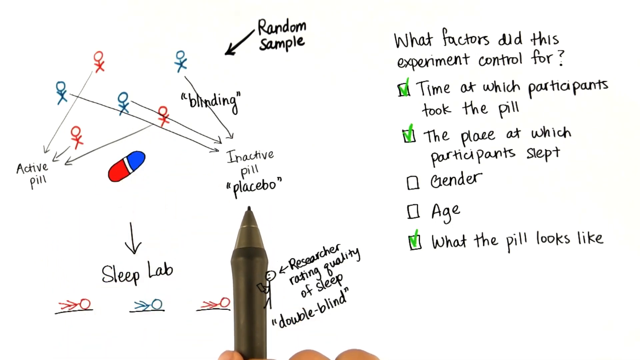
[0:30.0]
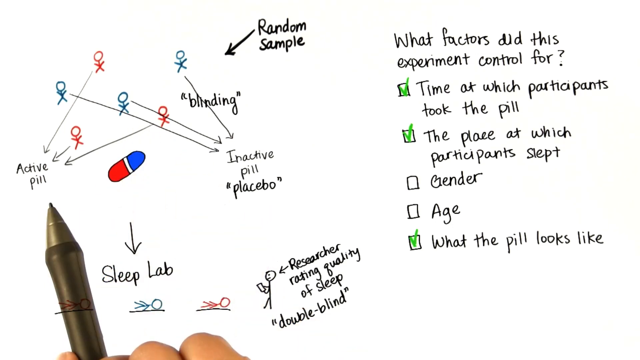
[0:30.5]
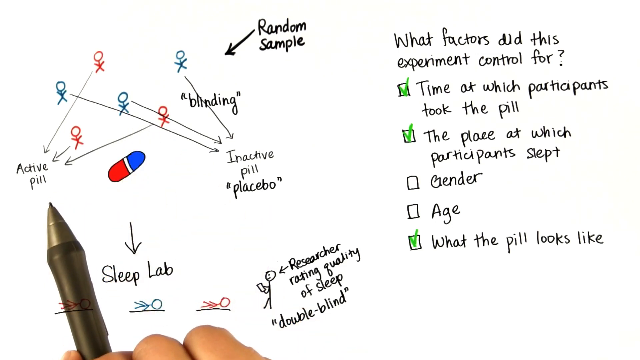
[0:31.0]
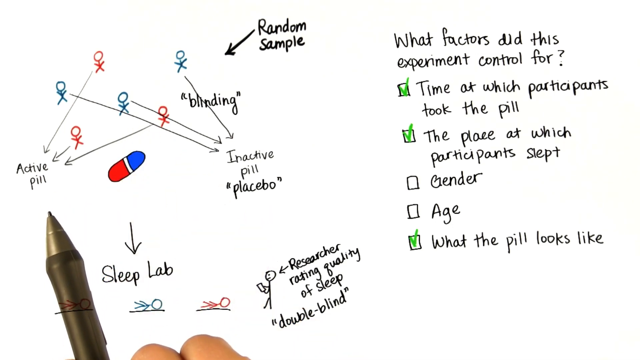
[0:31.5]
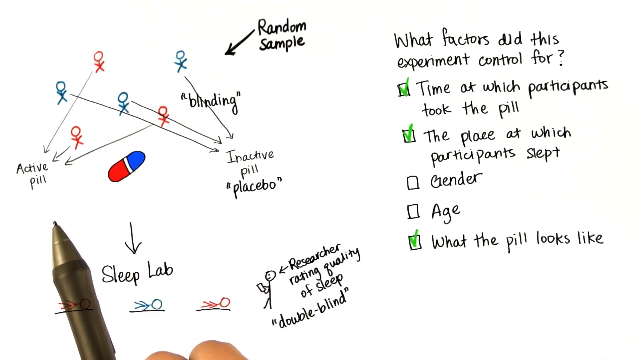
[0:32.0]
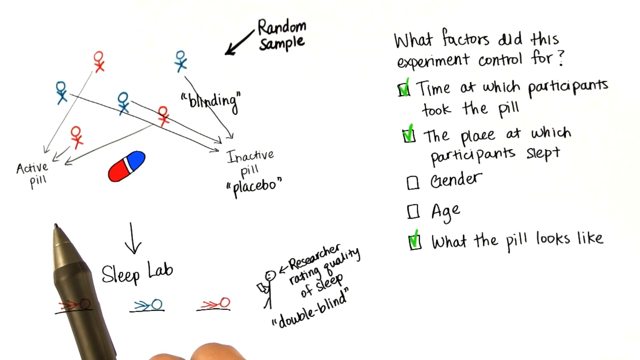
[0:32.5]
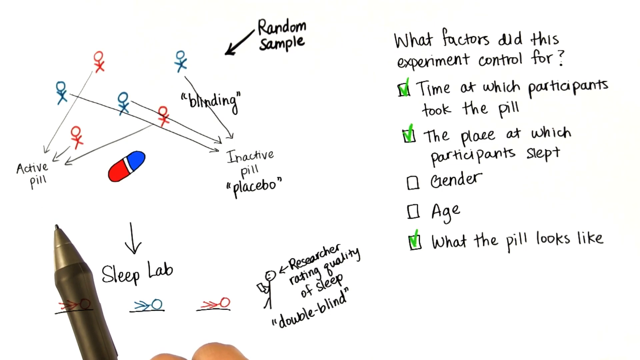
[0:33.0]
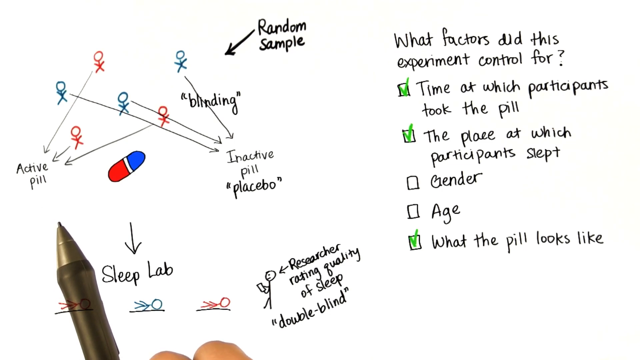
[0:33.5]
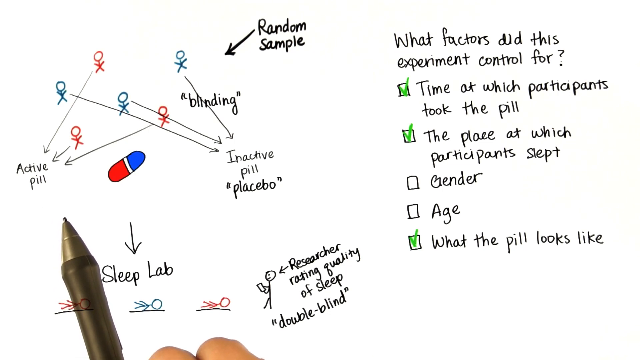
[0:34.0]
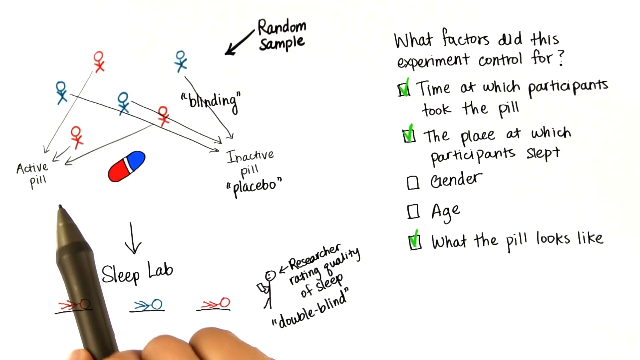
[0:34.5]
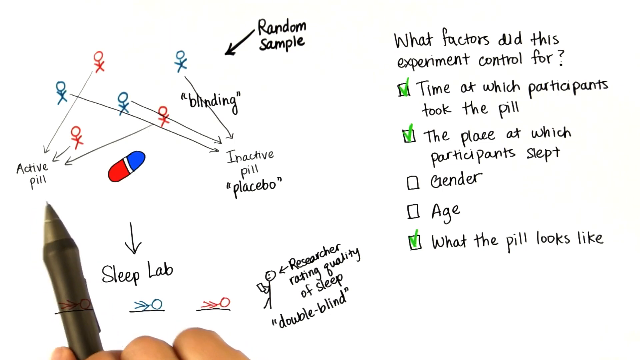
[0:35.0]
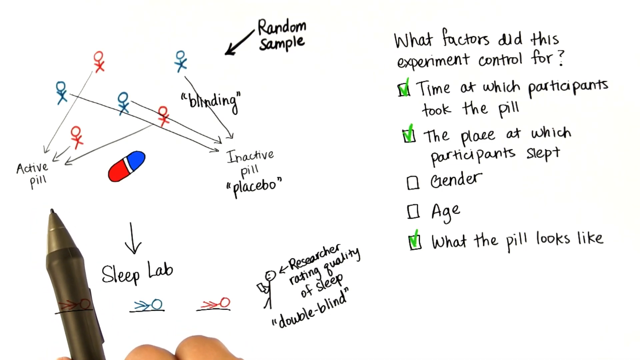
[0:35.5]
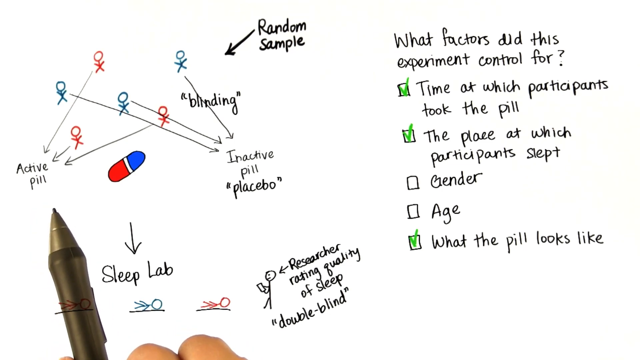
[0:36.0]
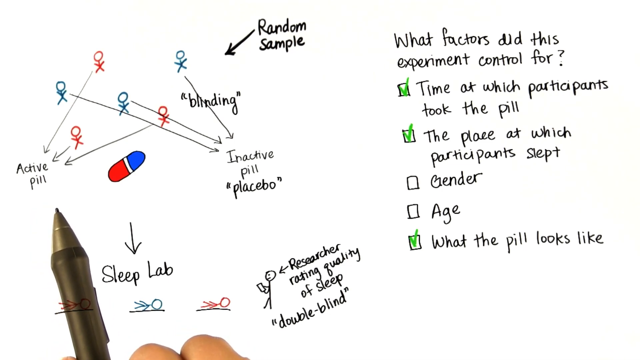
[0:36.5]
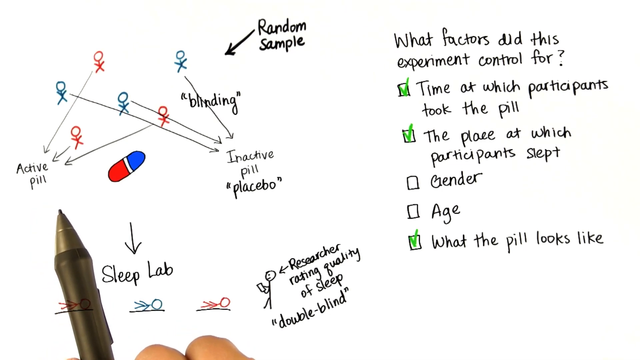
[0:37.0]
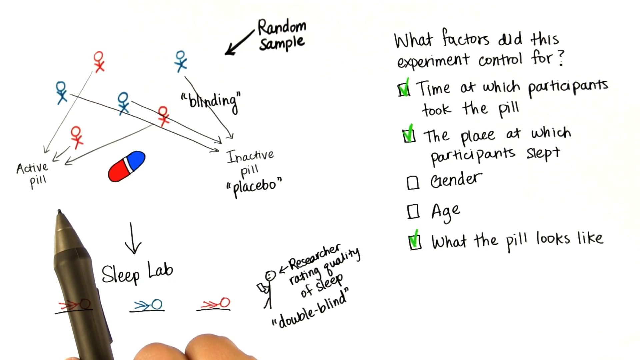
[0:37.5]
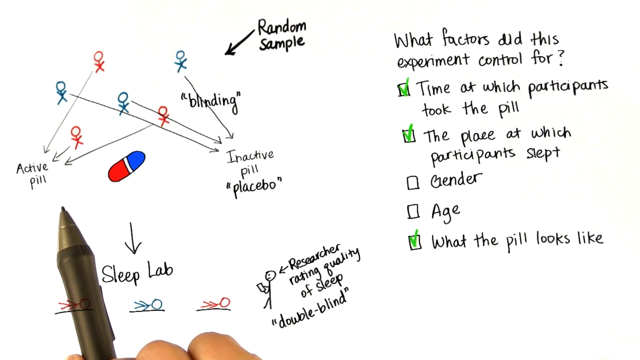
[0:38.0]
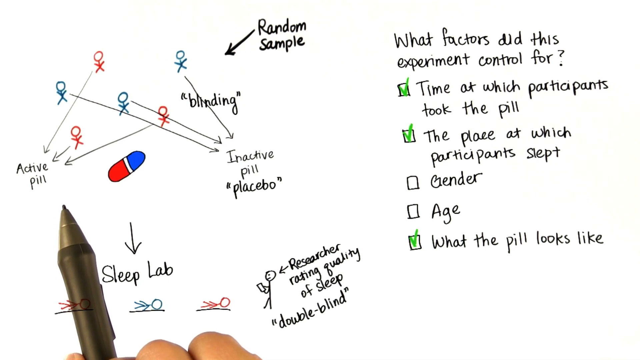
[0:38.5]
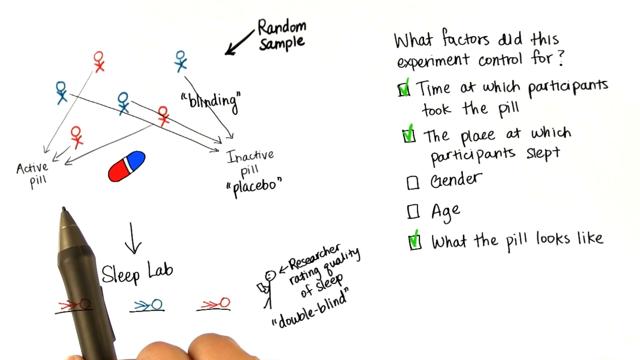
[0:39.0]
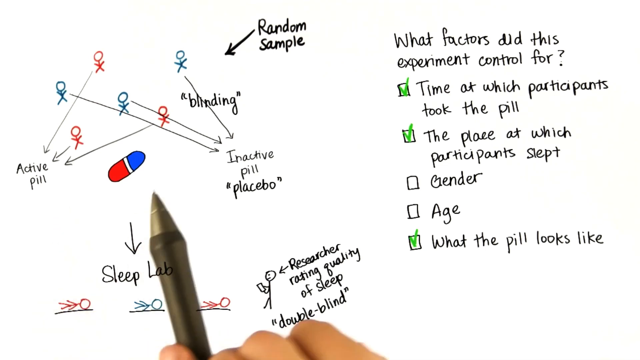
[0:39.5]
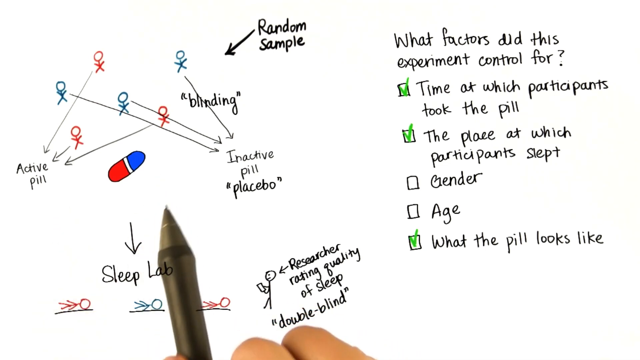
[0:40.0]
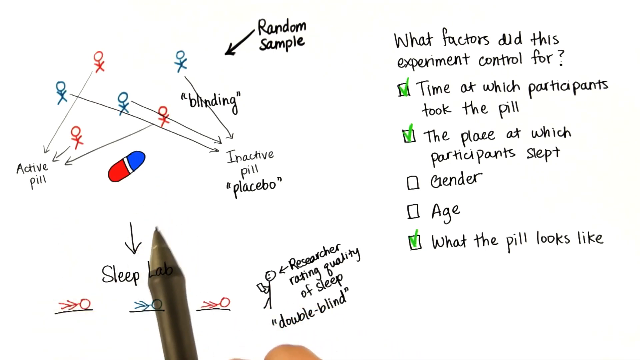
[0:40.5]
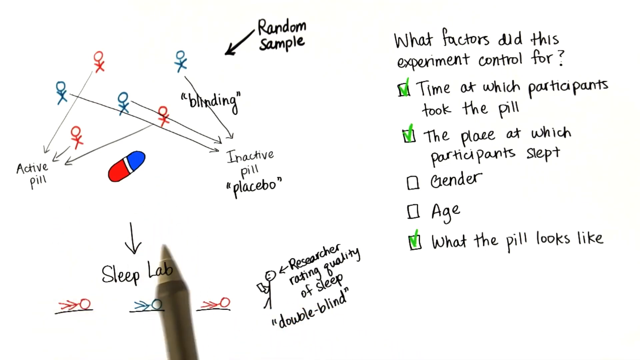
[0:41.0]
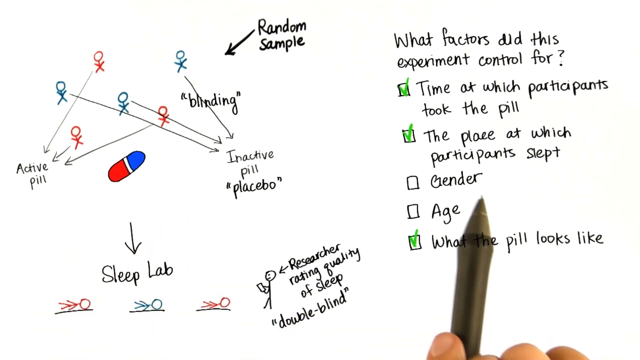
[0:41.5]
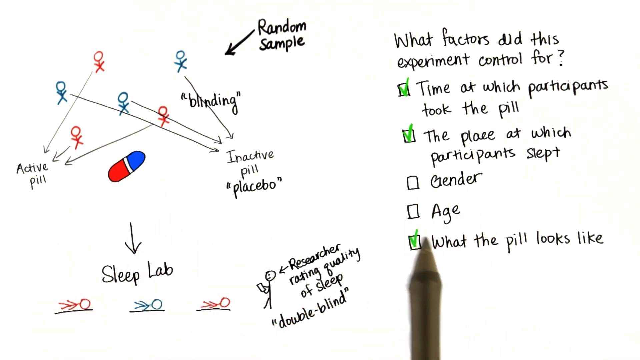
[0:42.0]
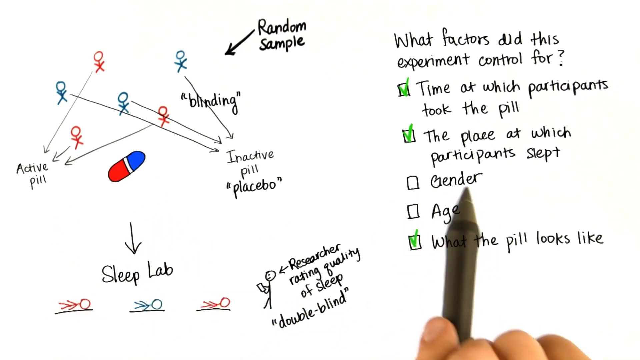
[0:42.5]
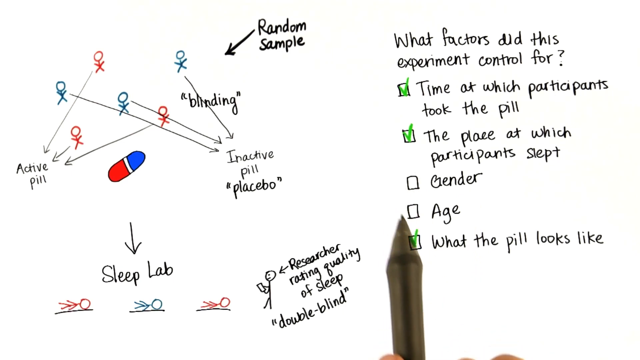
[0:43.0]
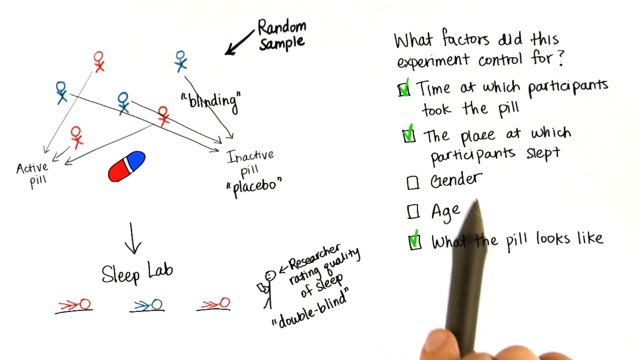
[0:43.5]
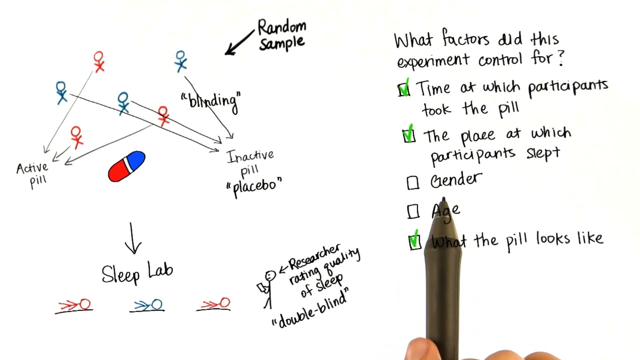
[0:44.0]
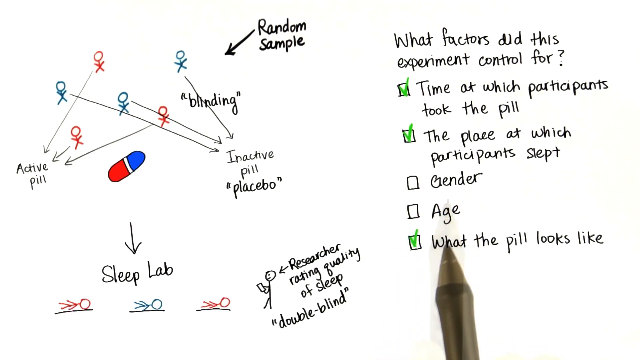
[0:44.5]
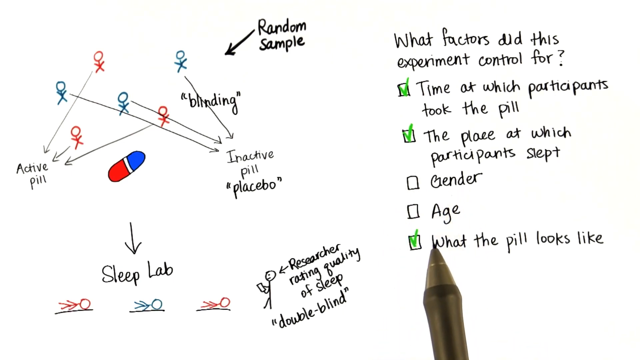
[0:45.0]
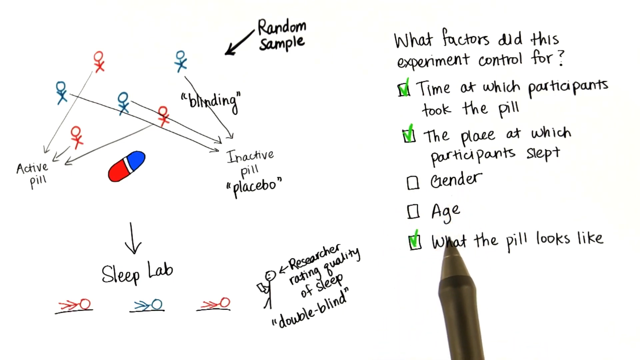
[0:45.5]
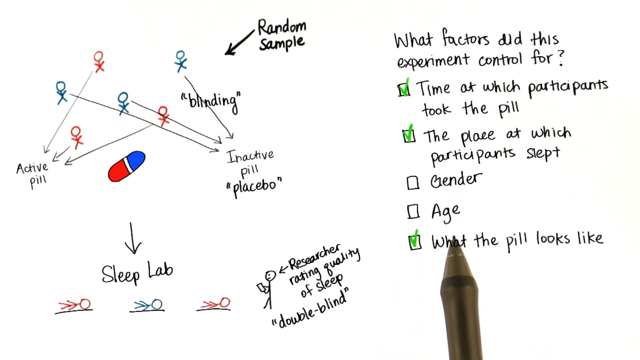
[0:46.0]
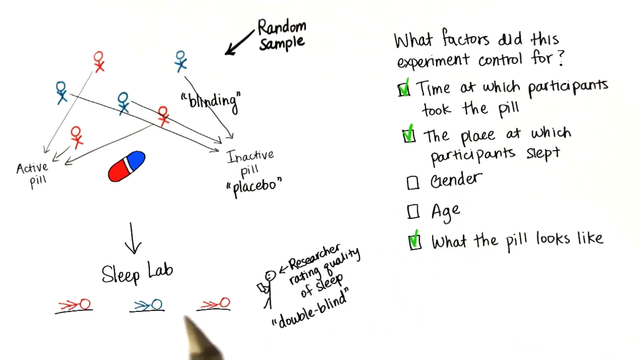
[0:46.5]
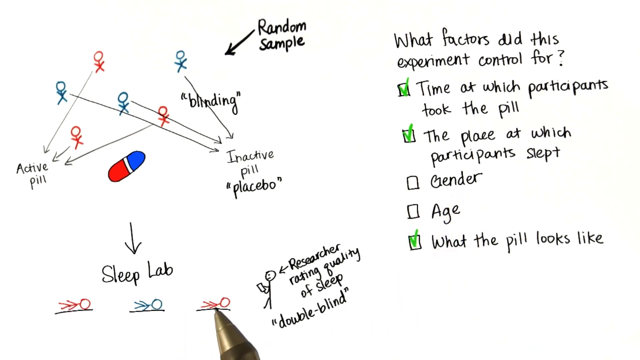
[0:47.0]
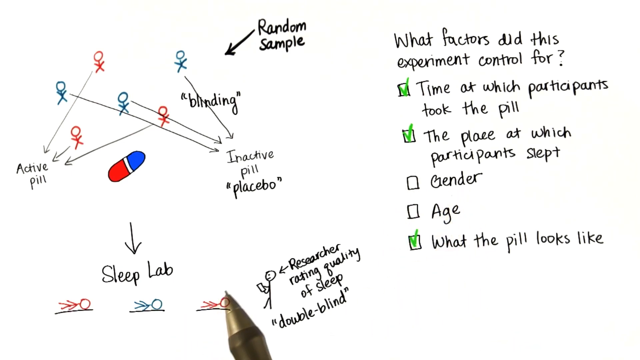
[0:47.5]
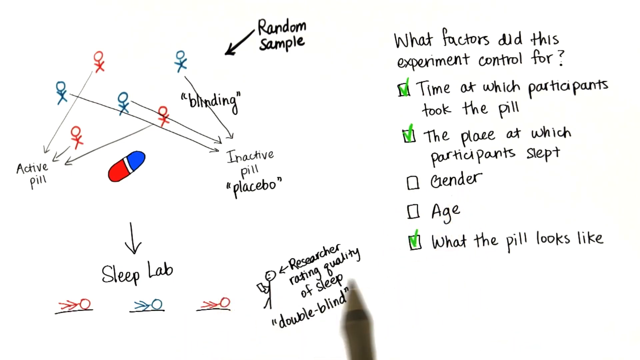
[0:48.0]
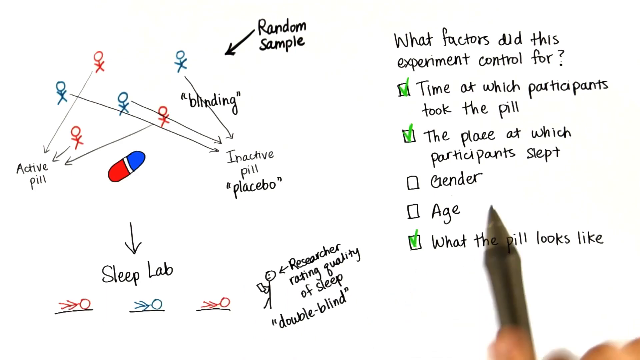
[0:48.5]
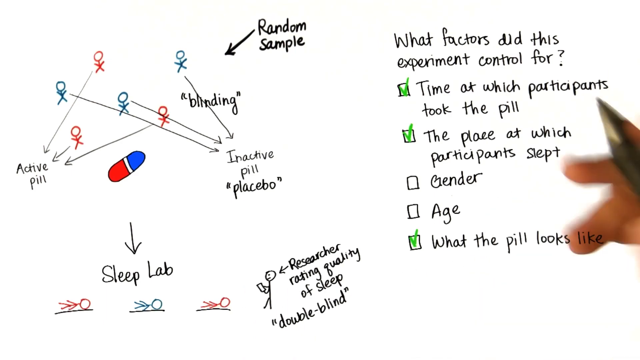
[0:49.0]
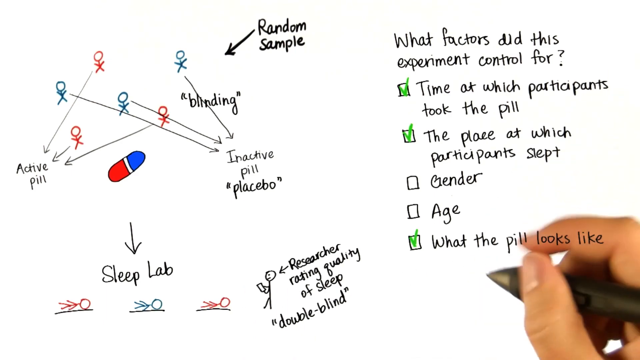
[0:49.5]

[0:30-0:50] Hand-drawn diagrams and writing are on a page. On the left-hand side are stick figures of people, three blue and four red. Underneath them is a drawn pill capsule, half blue and half red, with a white stripe down the centre. Arrows join the people together and point at different writing: "inactive pill", "placebo", "random sample" and "active pill". An arrow points down below those to the words "sleep lab". Underneath those words, three stick figures lie down on a line, and another stick figure stands next to them with a pointed arrow and the words "researcher rating quality of sleep double blind". On the right-hand side of the screen is writing listing five different factors under the title "what factors did this experiment control for?", with five tick boxes next to the choices: first "time at which participants took the pill", second "the place at which participants slept", third "gender", fourth "age", and fifth "what the pill looks like". The first, second and fifth have been ticked with a green pen. A hand holding a black pen moves across the screen, pointing at various parts of it and circling things such as the word "age", and pointing at the small stick figures as it moves around the screen.